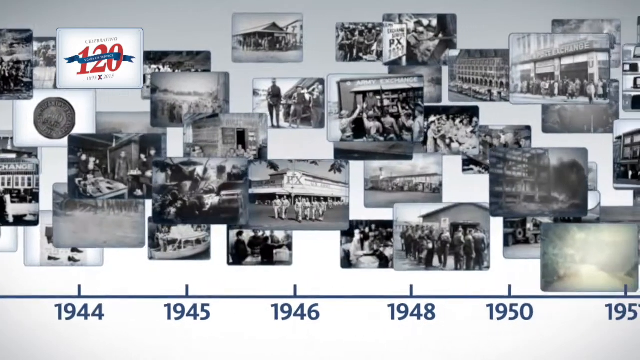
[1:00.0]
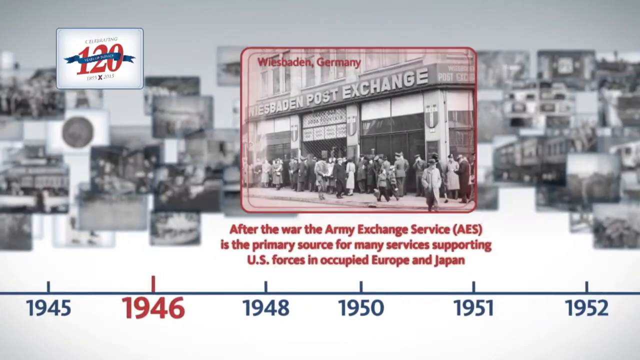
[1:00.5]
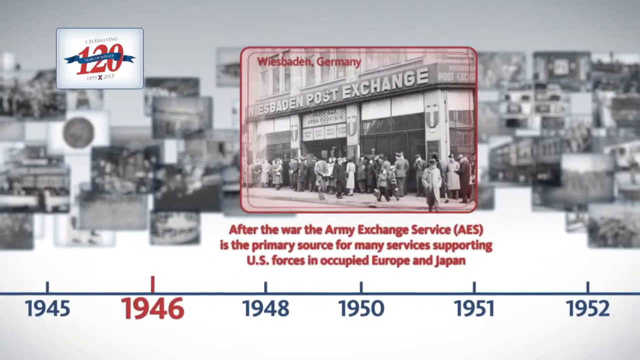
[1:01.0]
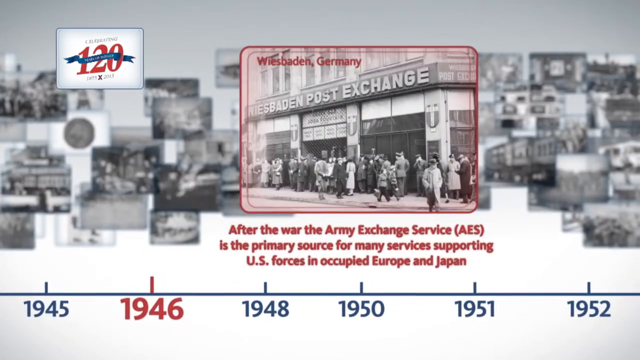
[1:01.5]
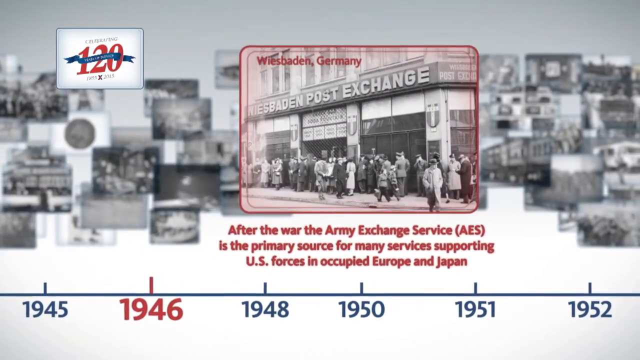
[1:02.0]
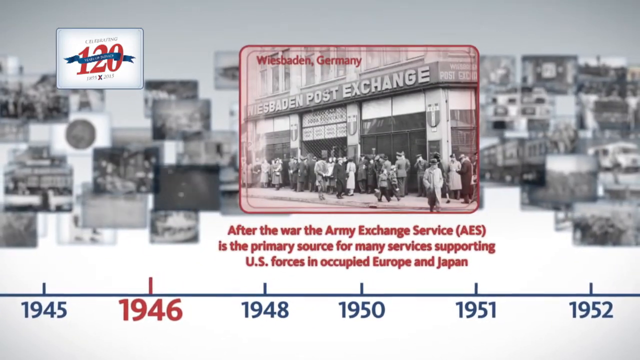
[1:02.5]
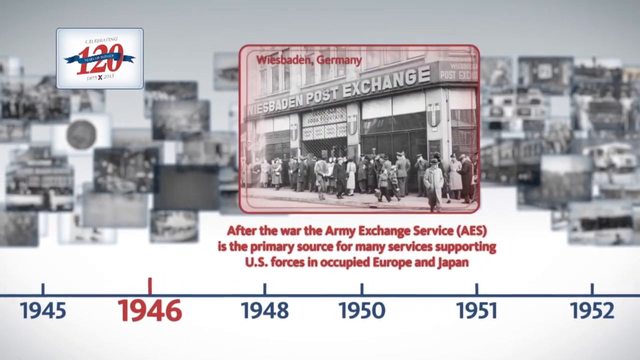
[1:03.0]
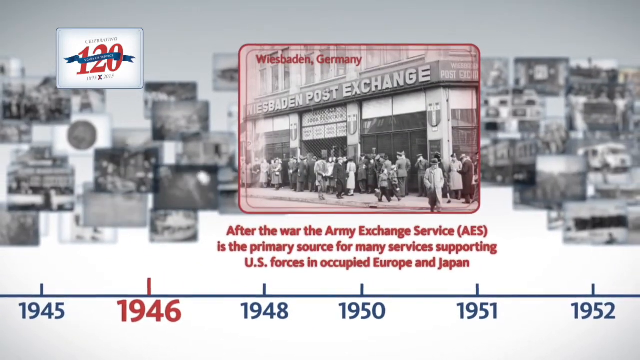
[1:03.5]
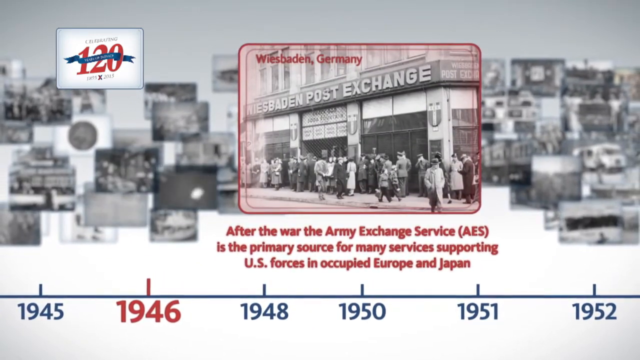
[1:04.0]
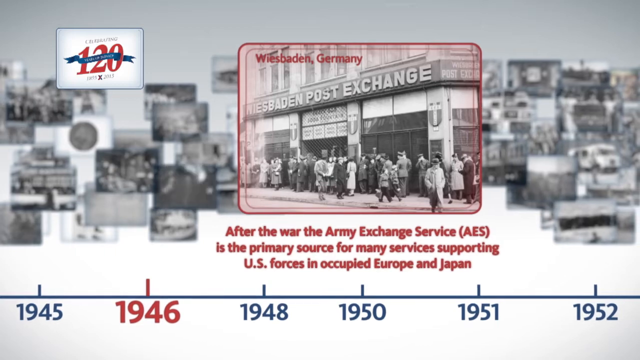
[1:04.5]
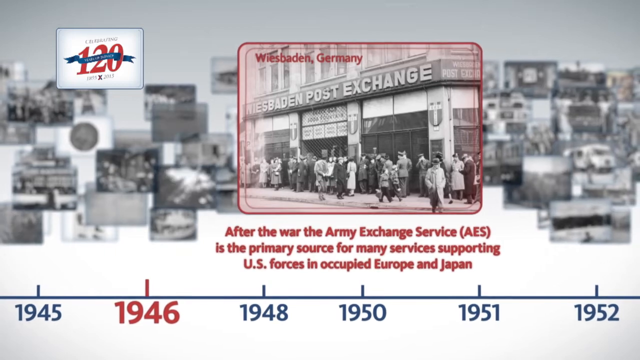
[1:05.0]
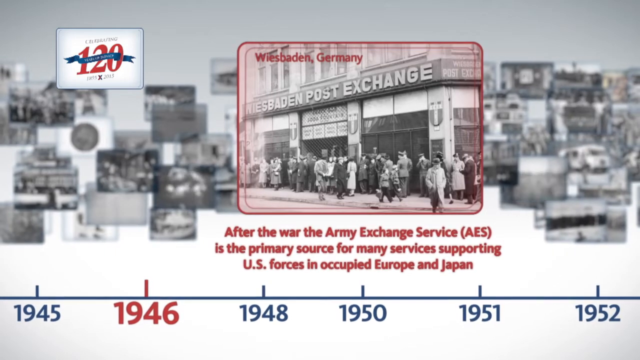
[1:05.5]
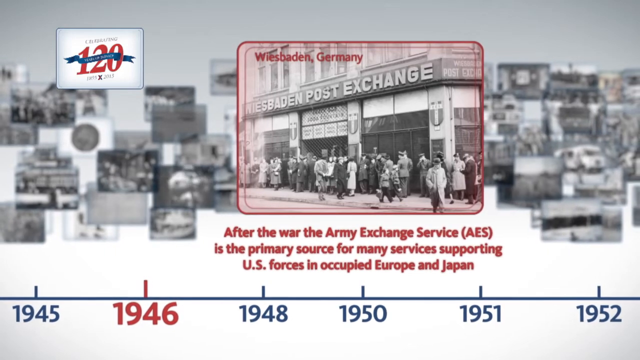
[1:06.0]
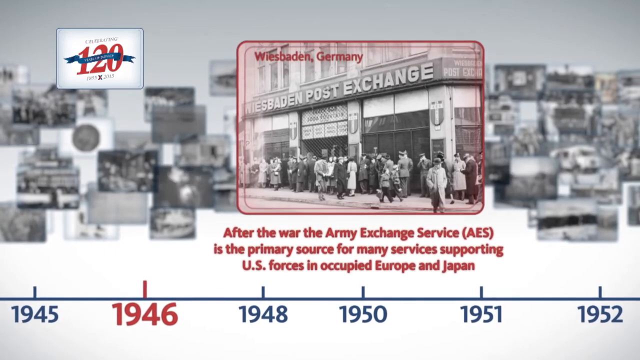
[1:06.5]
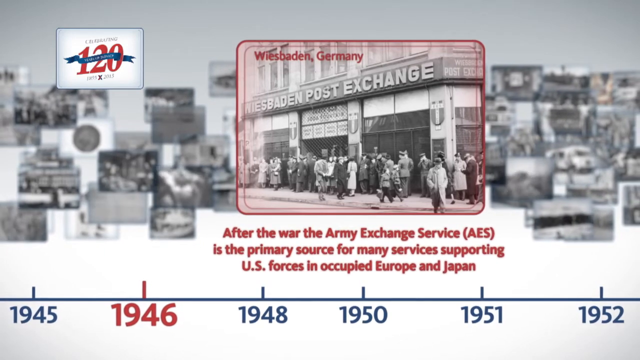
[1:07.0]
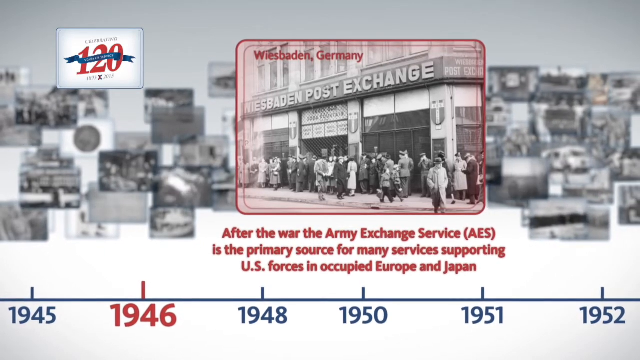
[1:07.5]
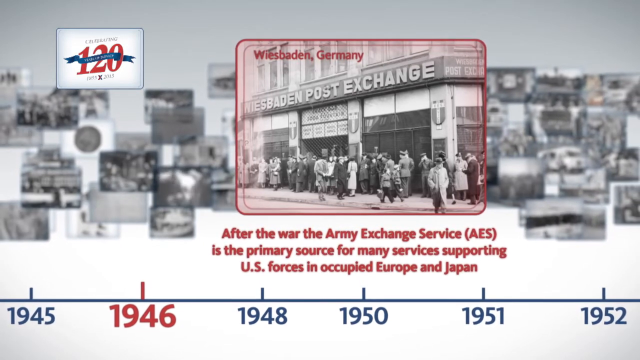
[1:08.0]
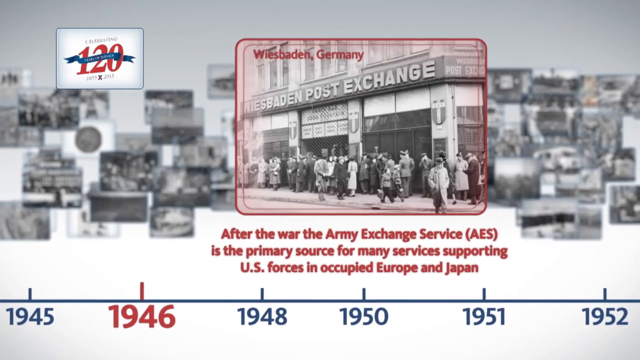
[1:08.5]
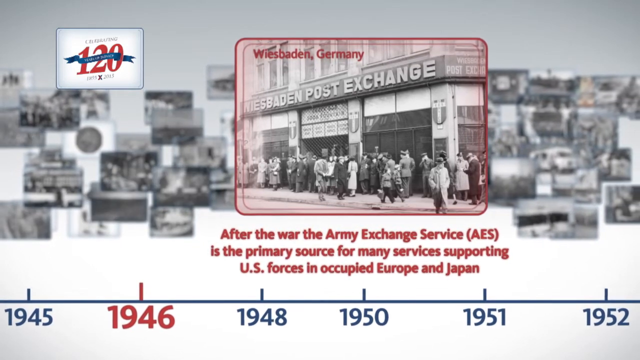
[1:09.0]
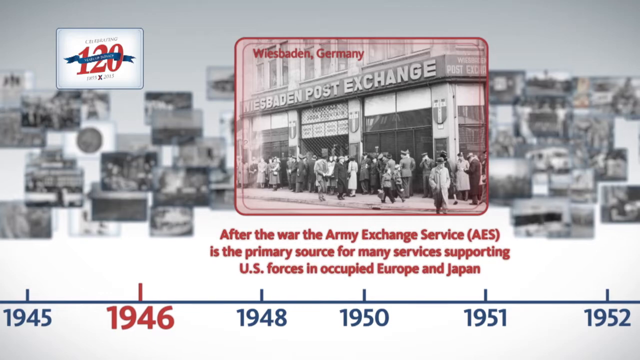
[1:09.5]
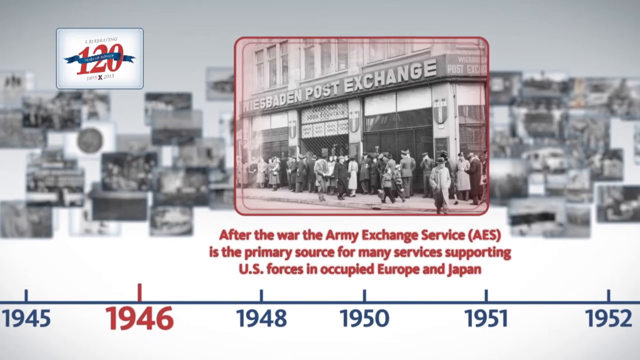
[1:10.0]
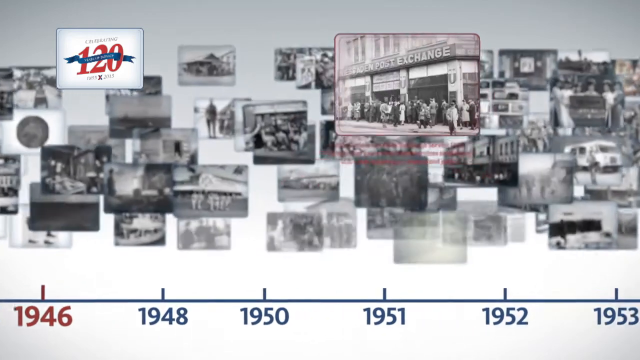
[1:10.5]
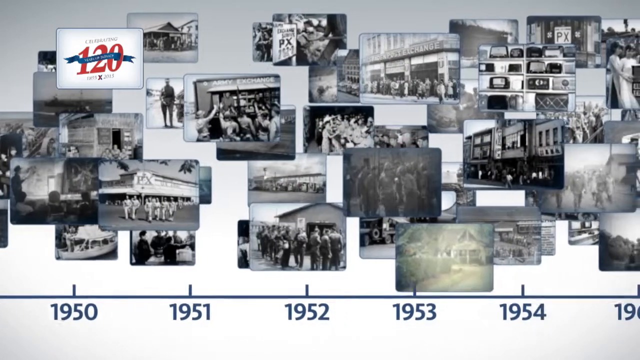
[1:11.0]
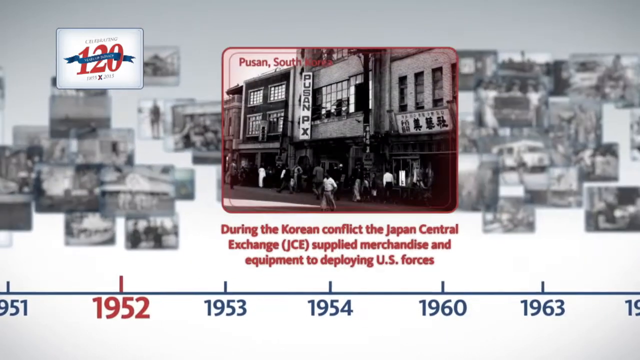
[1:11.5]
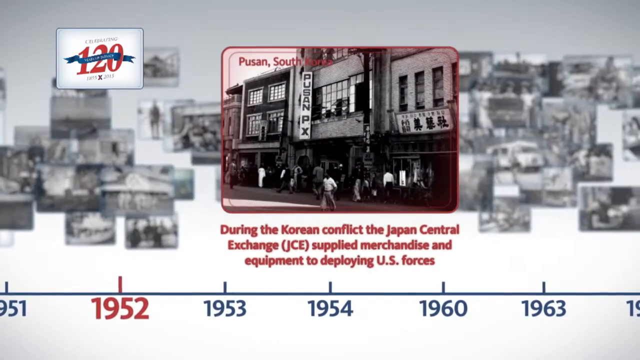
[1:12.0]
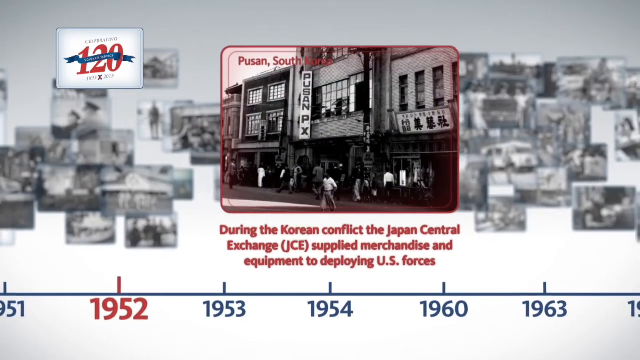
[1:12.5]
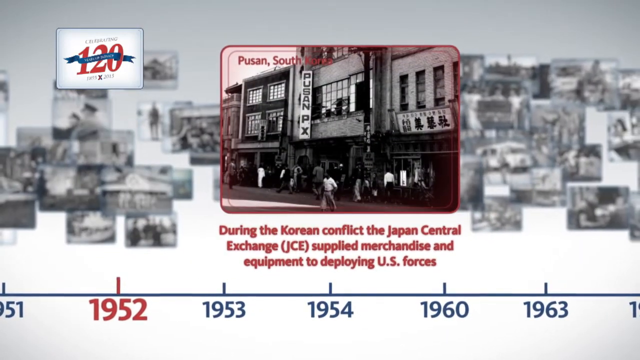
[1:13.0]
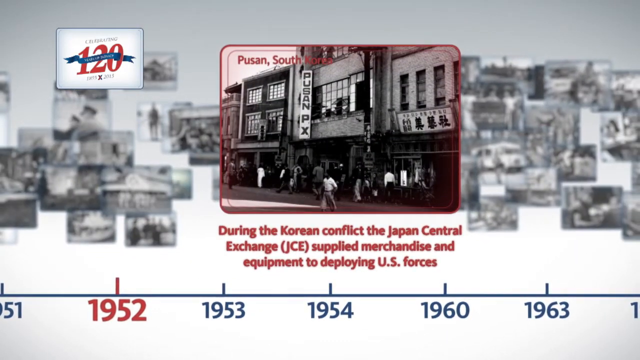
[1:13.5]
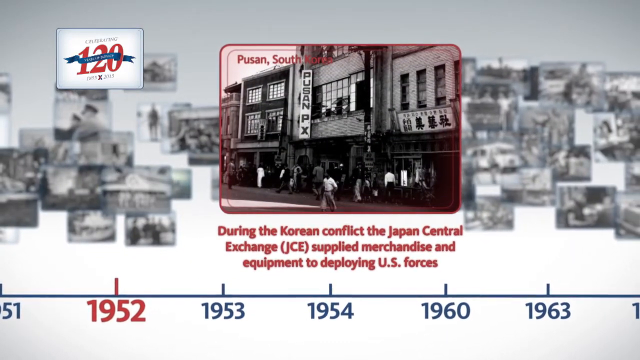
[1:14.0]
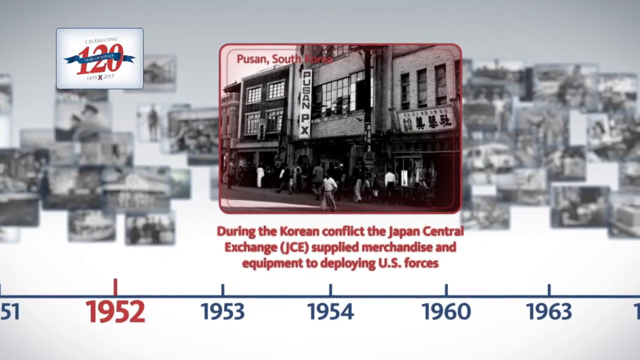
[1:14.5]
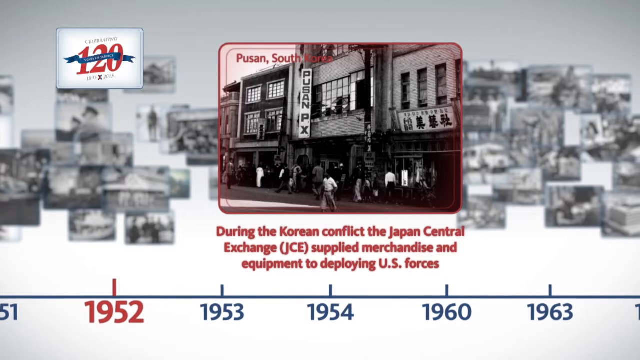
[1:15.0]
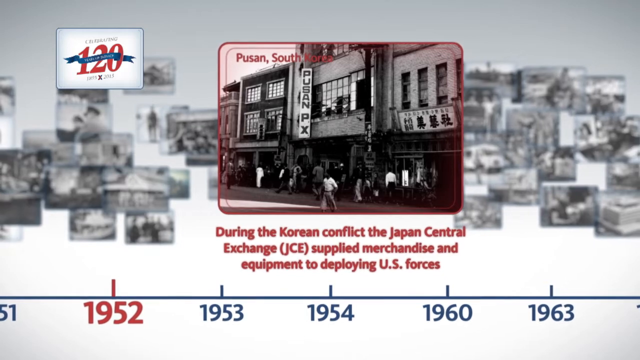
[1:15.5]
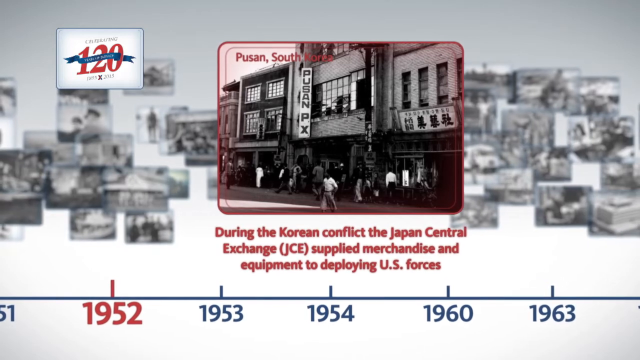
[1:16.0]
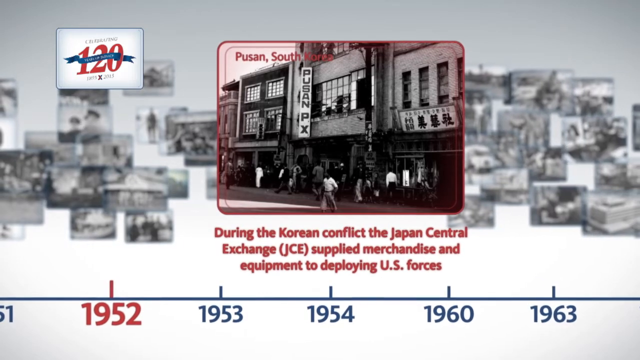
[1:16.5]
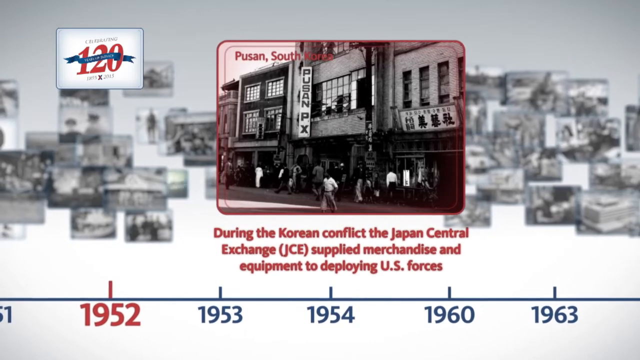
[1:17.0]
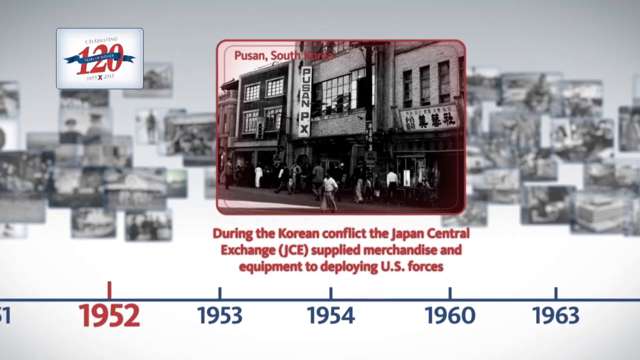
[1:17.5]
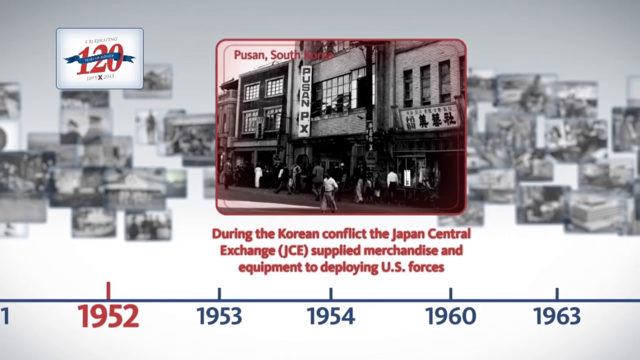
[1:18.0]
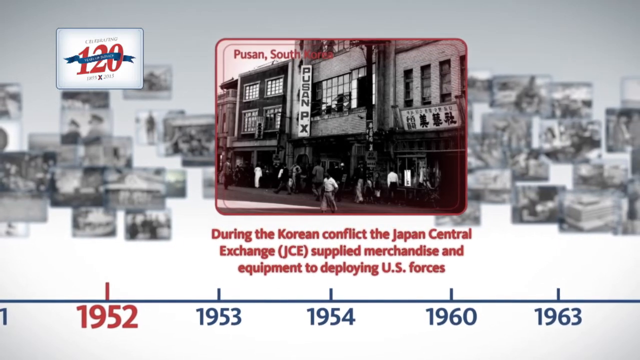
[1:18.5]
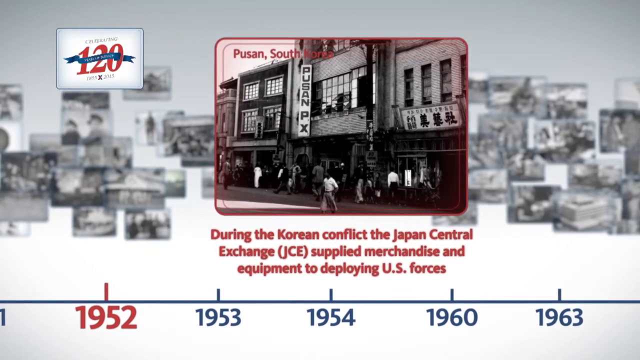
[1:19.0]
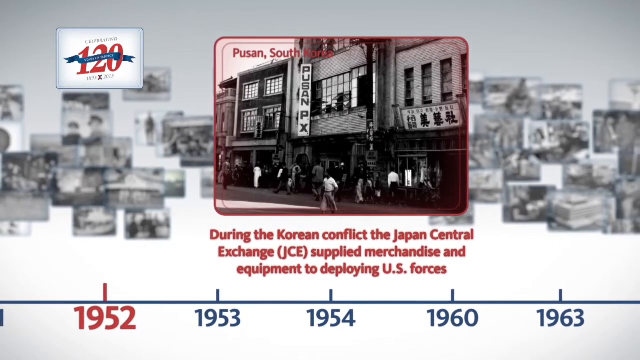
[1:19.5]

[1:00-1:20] The timeline moves to 1946 in Wiesbaden, Germany, which is written in the upper left corner of the highlighted black and white photograph, bordered in red with faded red leading into it. The event is the Army Exchange Service after World War II in Germany, a primary source for many services supporting U.S. forces in Europe and Japan. Next comes 1952 in Pusan, South Korea, written in the upper left corner of another red-bordered photograph: during the Korean conflict, the Japan Central Exchange supplied merchandise and equipment to U.S. forces.